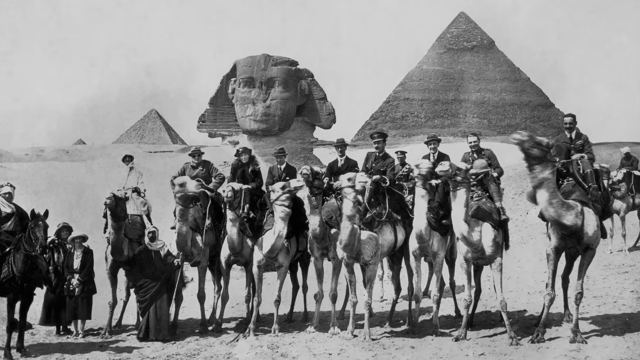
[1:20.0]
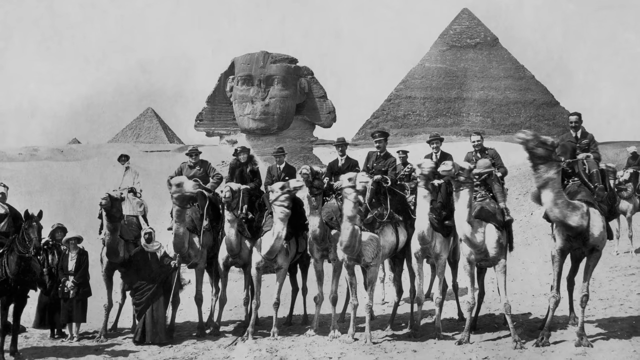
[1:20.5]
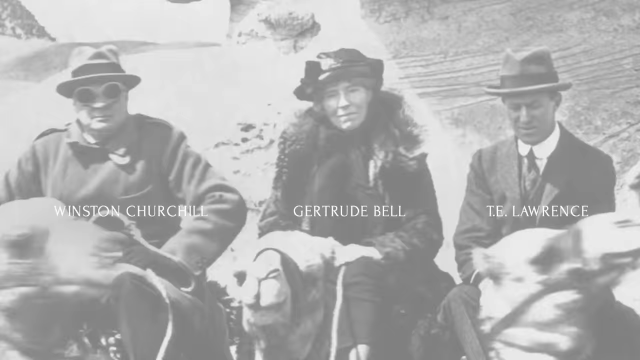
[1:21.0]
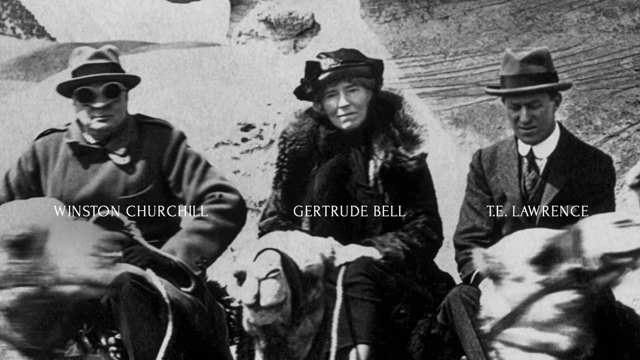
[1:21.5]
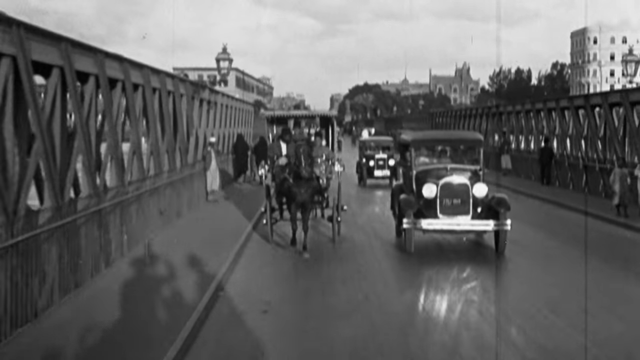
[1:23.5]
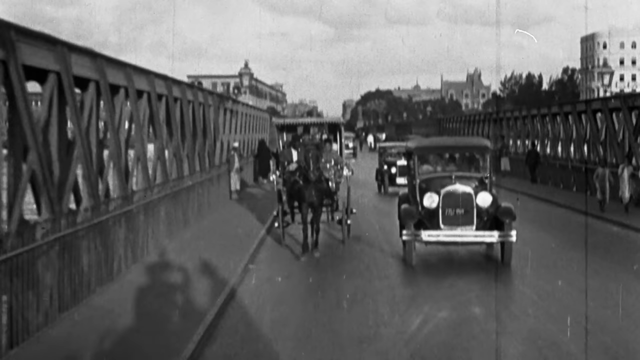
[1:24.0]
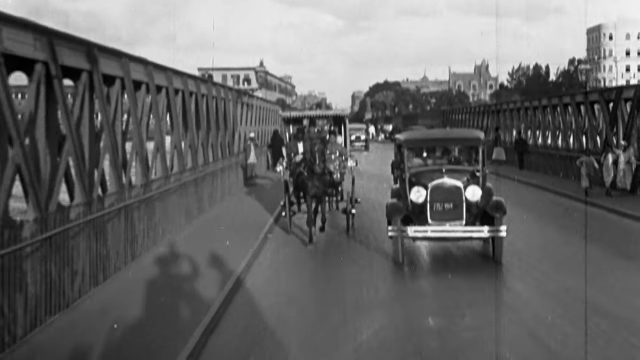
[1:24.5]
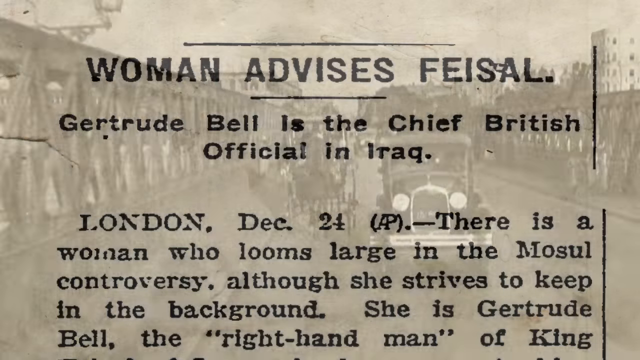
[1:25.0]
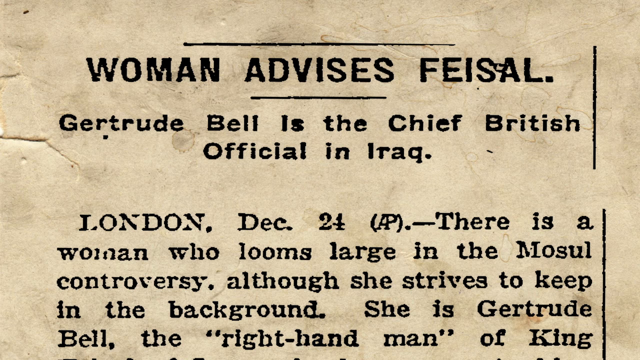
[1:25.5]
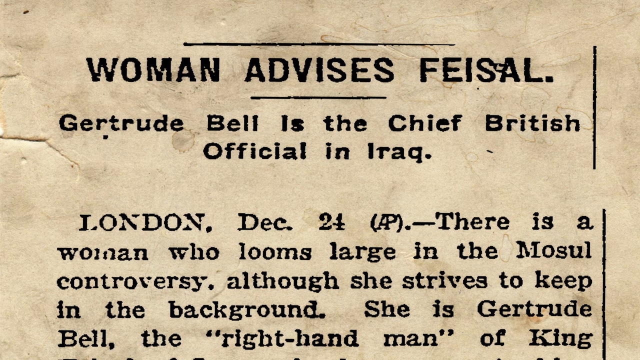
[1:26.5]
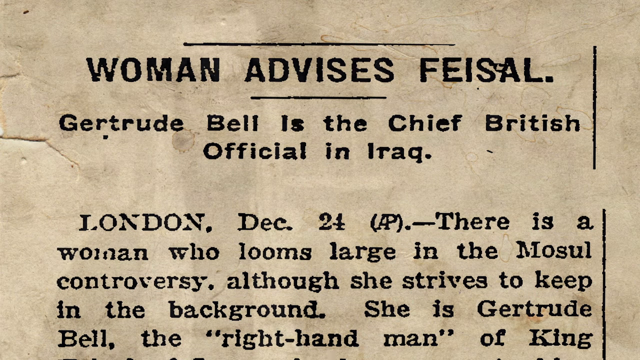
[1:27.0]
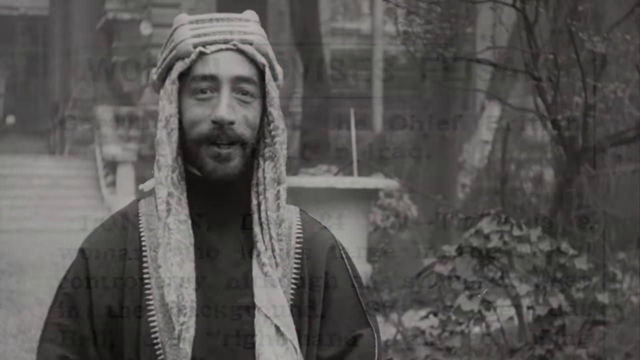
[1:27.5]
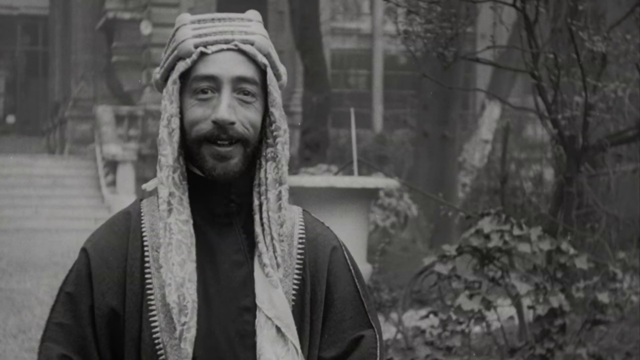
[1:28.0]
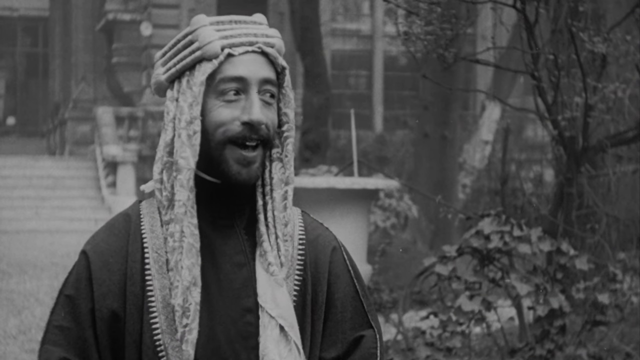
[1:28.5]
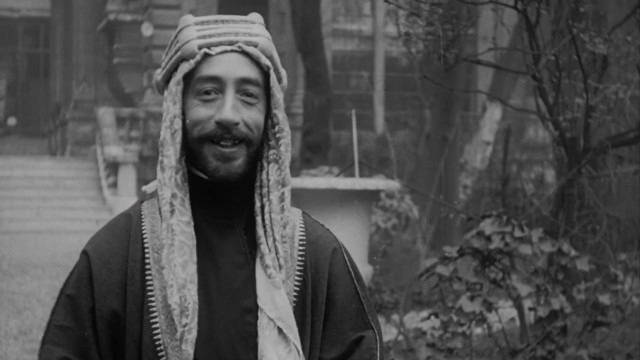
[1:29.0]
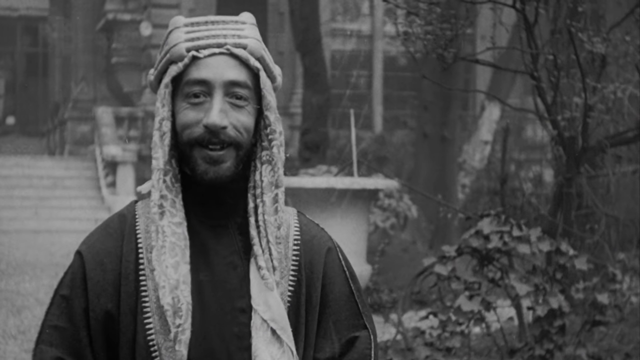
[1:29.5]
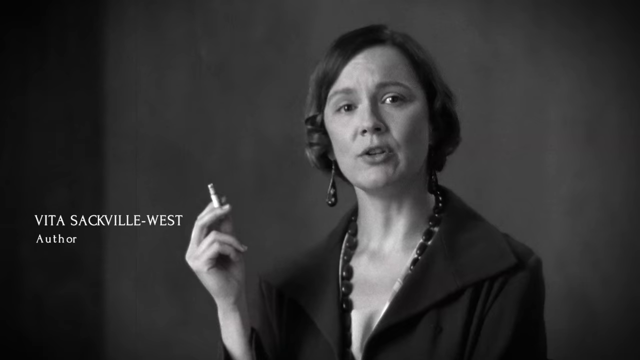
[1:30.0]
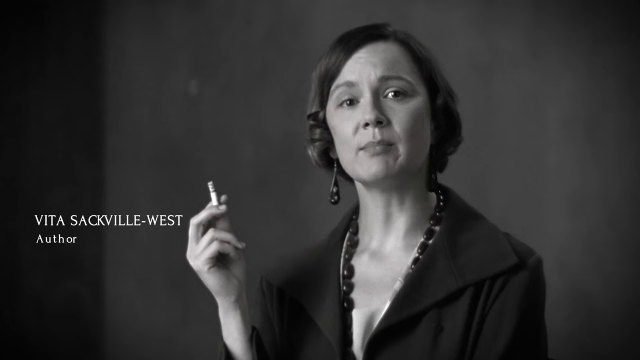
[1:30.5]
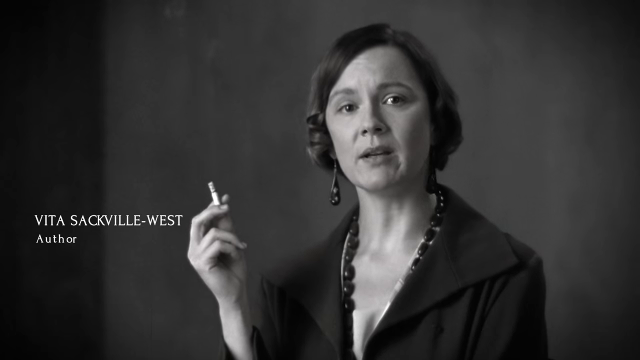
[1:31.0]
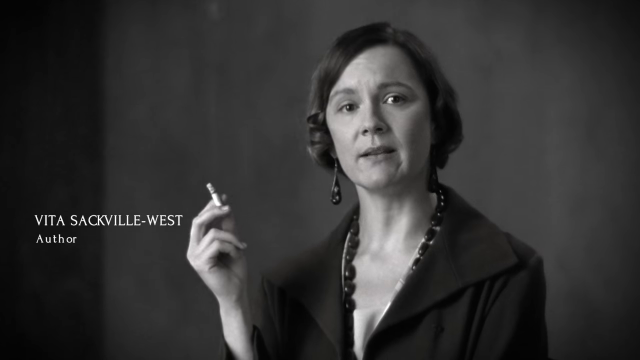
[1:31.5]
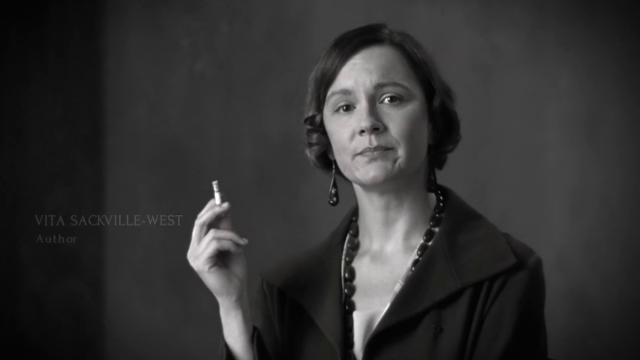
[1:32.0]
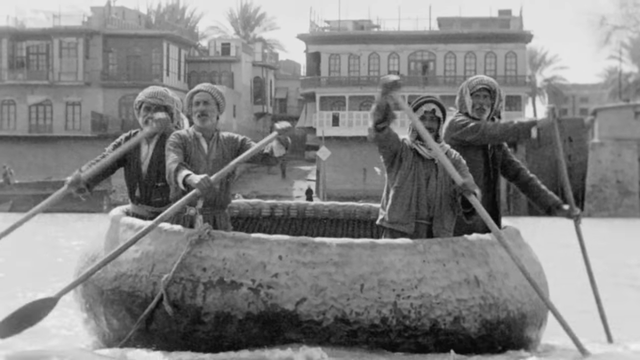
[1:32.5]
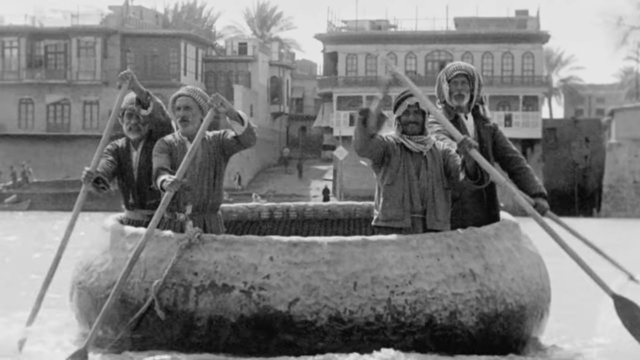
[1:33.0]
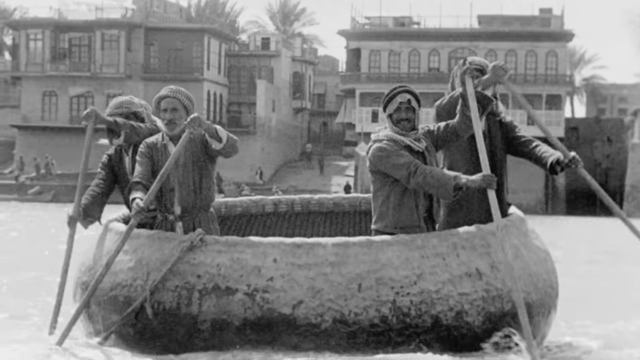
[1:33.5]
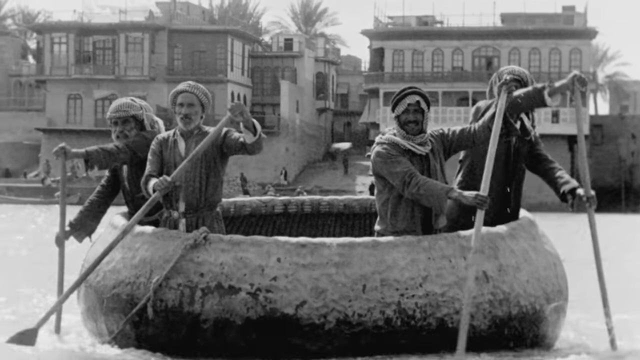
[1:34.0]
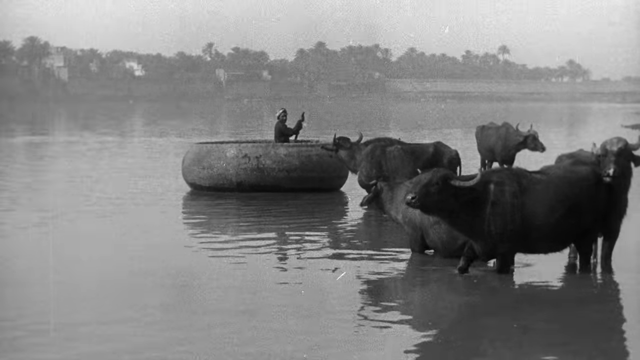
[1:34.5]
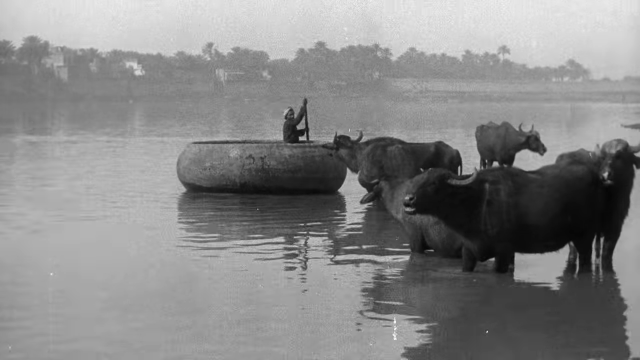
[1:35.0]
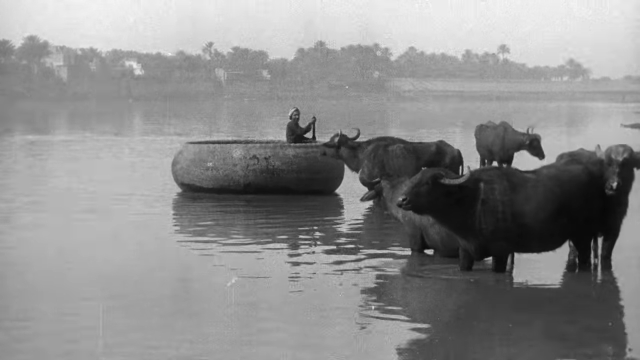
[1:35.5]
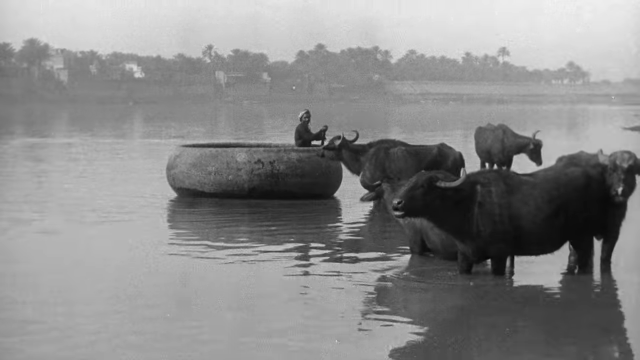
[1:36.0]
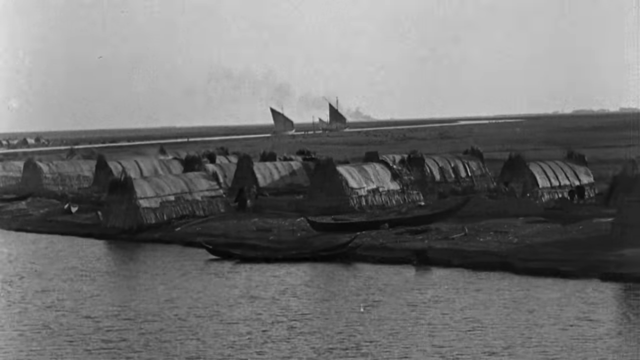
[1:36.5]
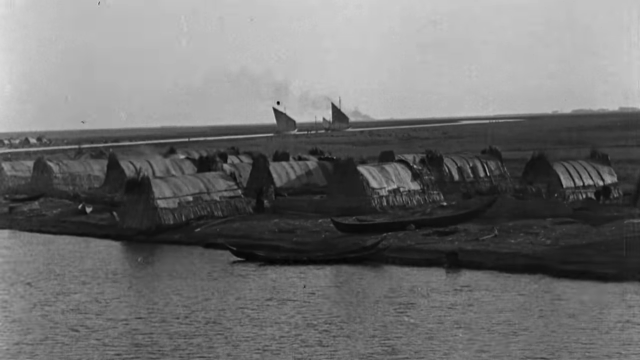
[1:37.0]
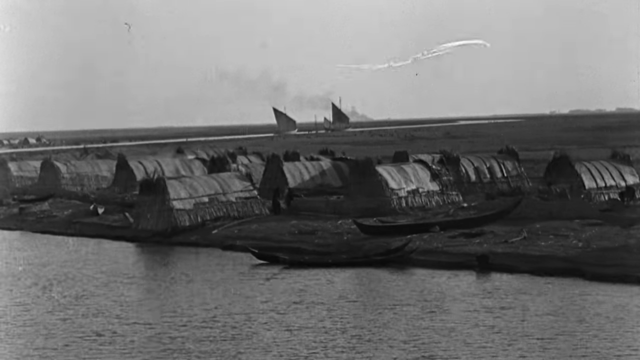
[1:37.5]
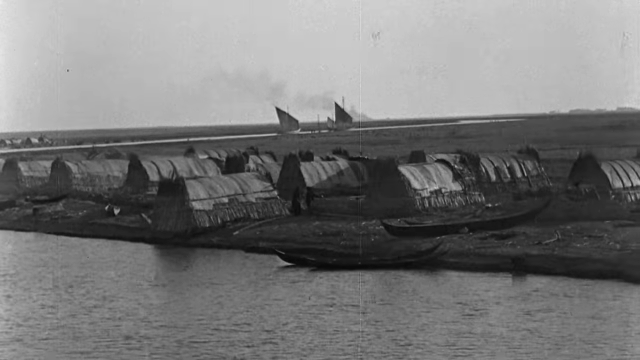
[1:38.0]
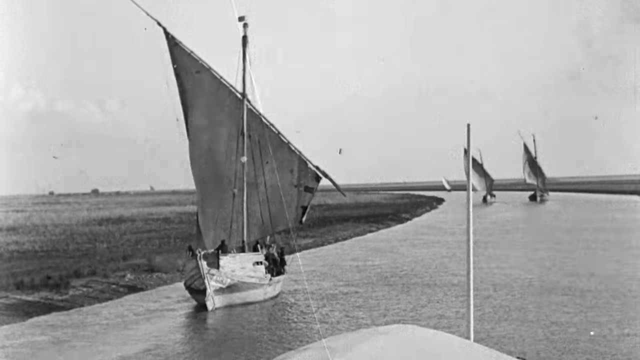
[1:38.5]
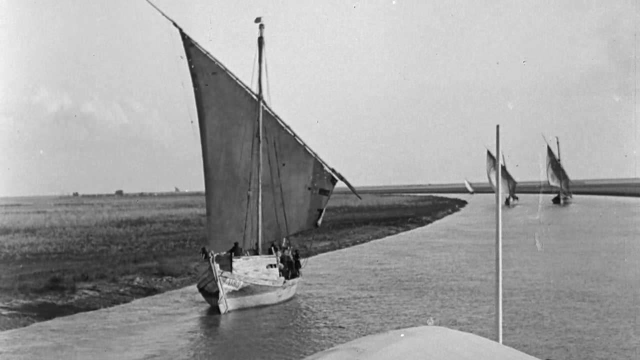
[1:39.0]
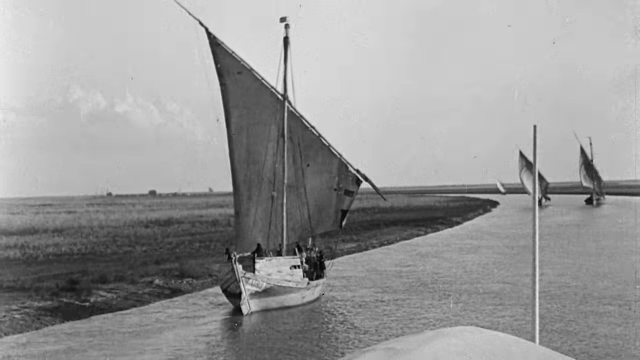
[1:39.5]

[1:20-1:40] An image shows three people on the backs of camels: from left to right, Winston Churchill, Gertrude Bell in the middle, and T.E. Lawrence on the right, all looking matter-of-factly at the camera. A city scene follows, with a chariot pulled by a horse and older gasoline cars driving toward the camera. Next is a snippet of a newspaper article titled "woman advises Faisal," identifying Gertrude Bell as the chief British official in Iraq. Then what appears to be a Bedouin man in a headdress and a loose-fitting garment smiles, with what looks like a home or steps leading up to a home in the background. Finally, four men roll some sort of round craft on a calm body of water, where oxen wait in the water, structures line the sides of the waterway, and sailboats are on the water.